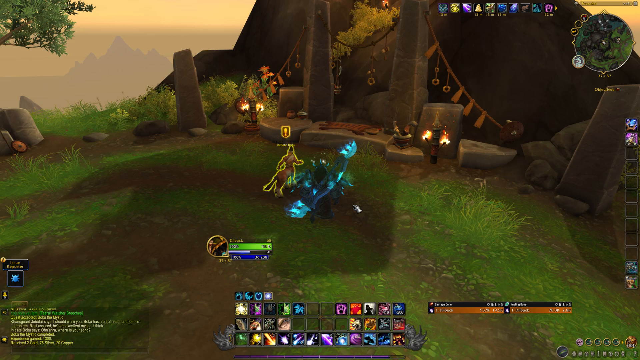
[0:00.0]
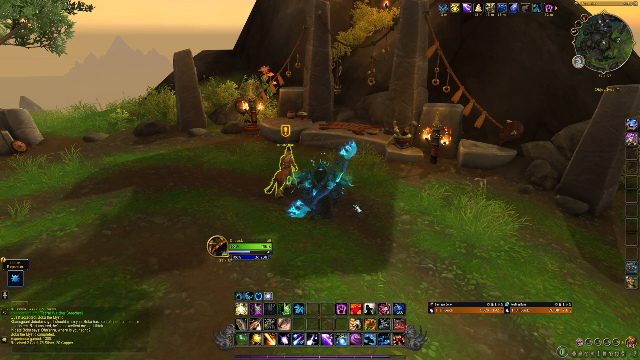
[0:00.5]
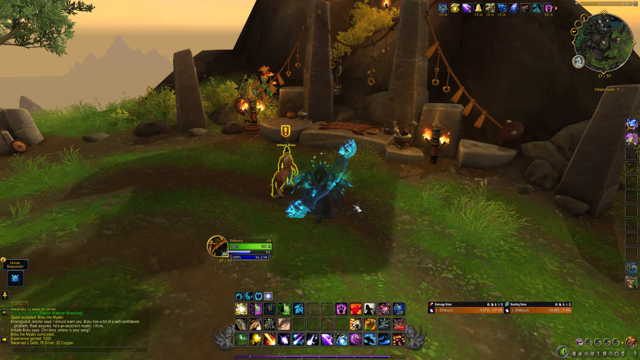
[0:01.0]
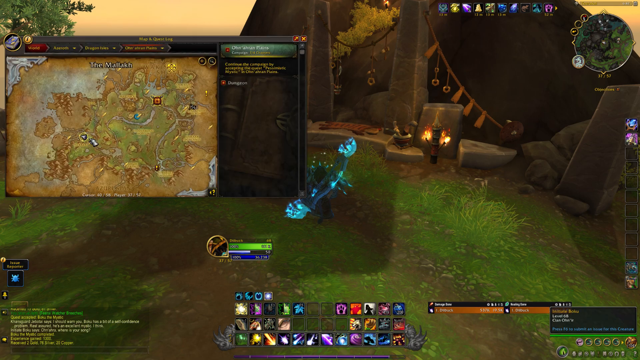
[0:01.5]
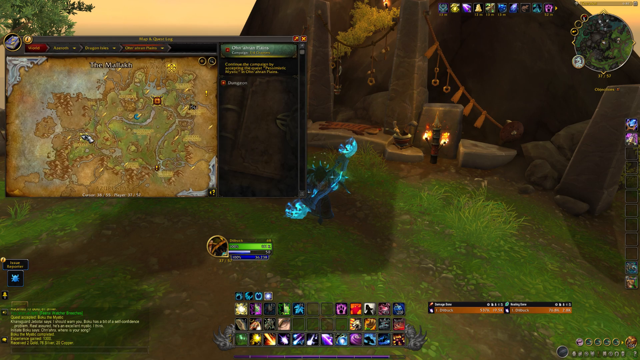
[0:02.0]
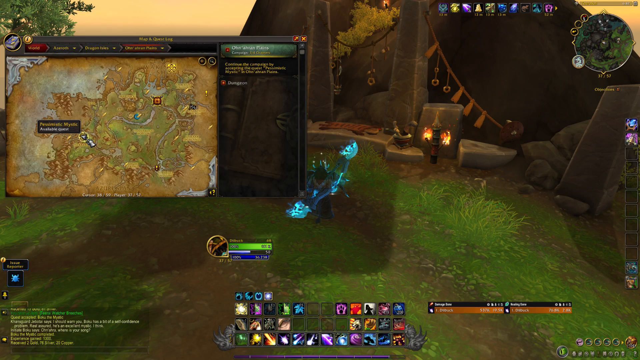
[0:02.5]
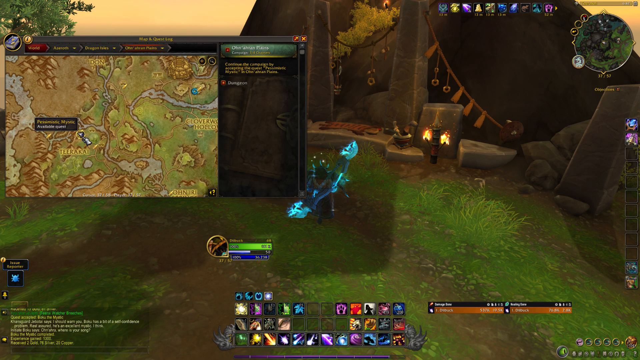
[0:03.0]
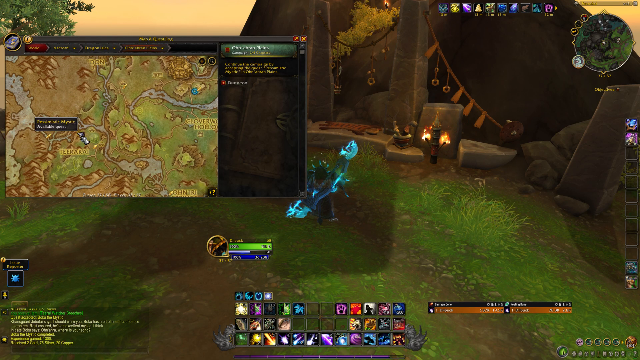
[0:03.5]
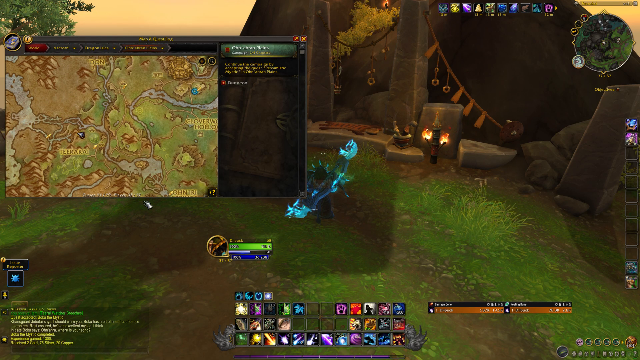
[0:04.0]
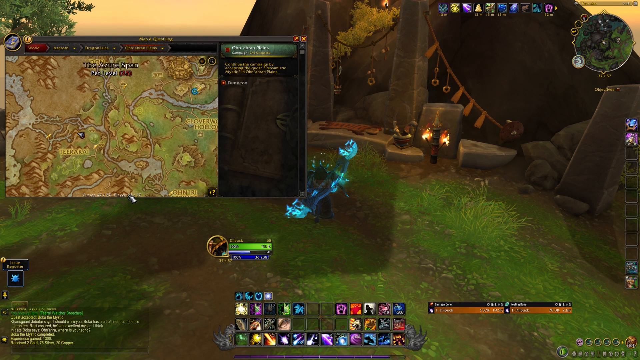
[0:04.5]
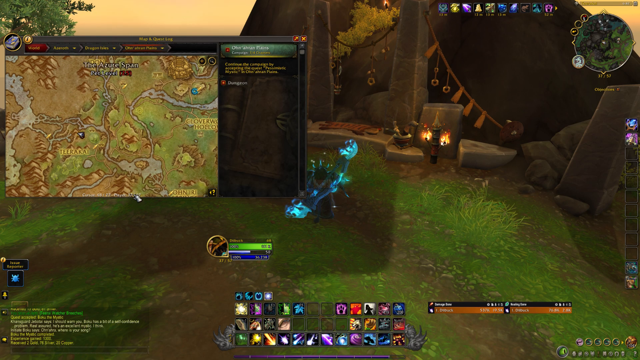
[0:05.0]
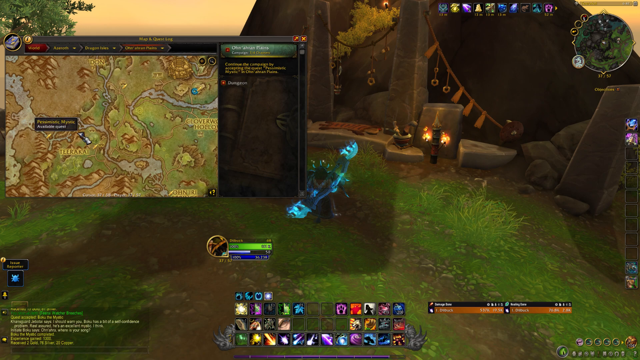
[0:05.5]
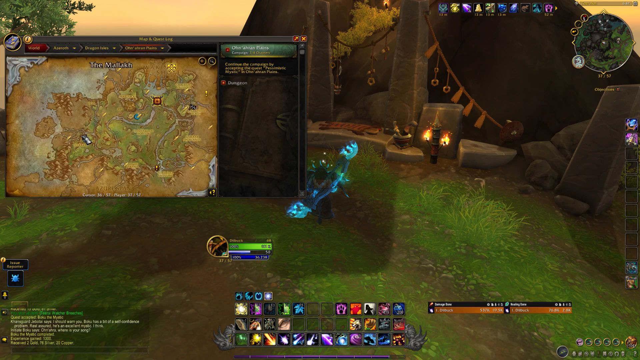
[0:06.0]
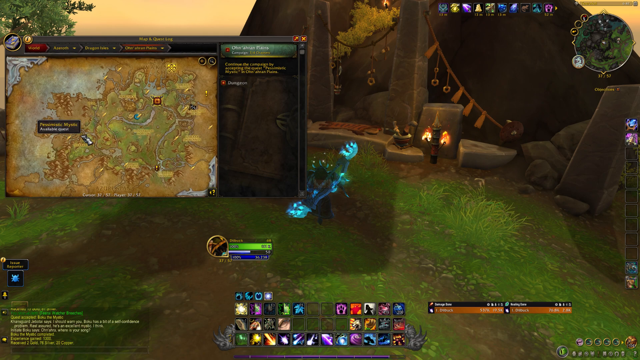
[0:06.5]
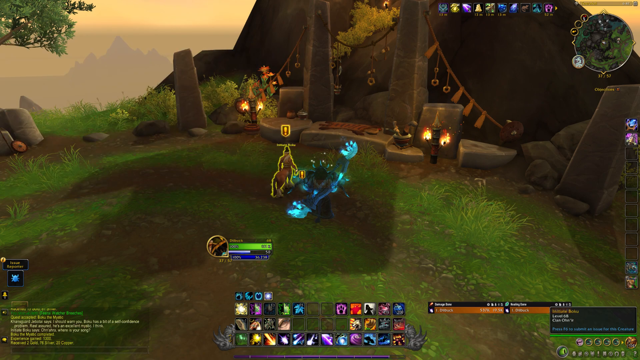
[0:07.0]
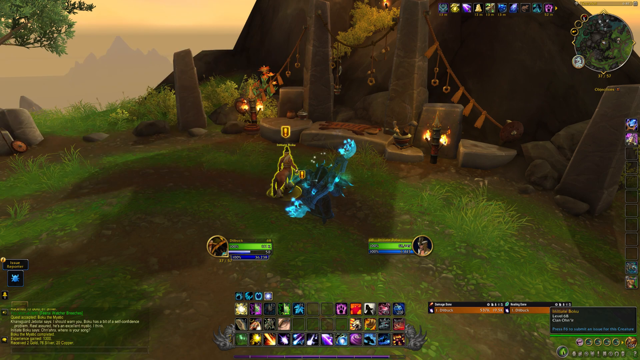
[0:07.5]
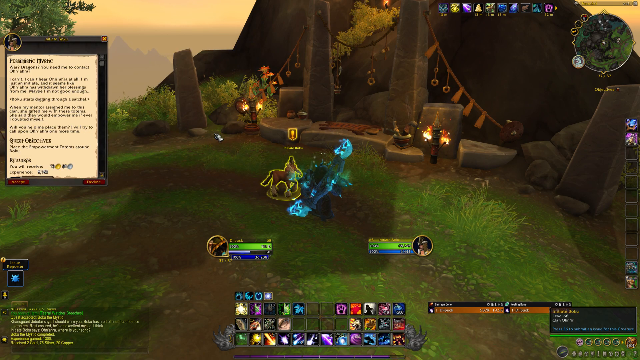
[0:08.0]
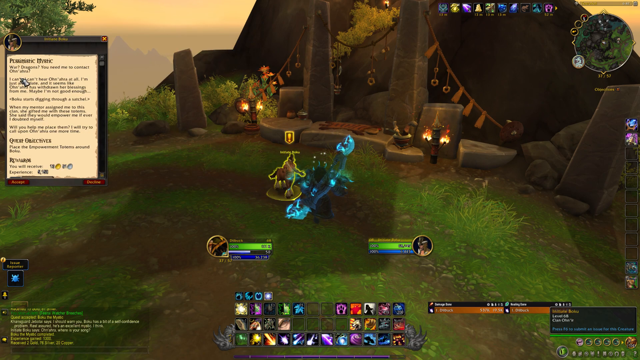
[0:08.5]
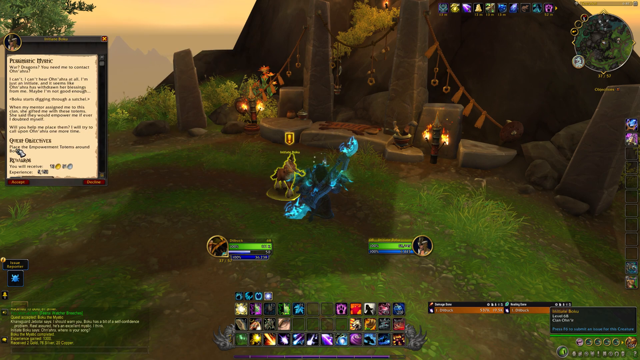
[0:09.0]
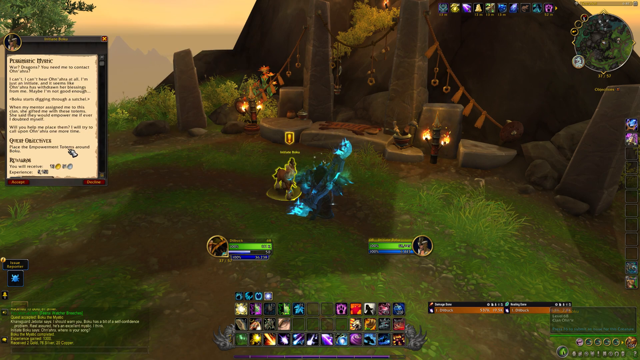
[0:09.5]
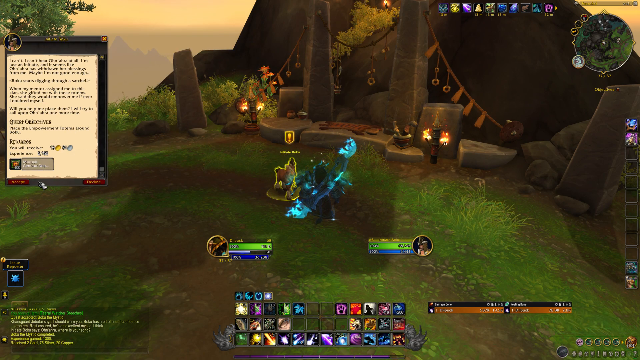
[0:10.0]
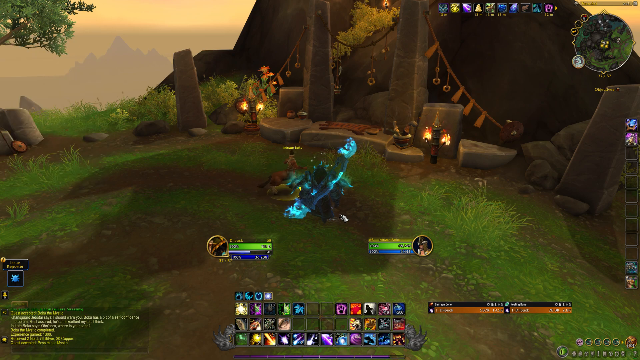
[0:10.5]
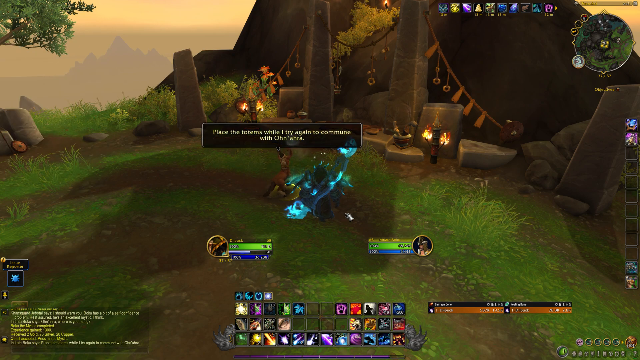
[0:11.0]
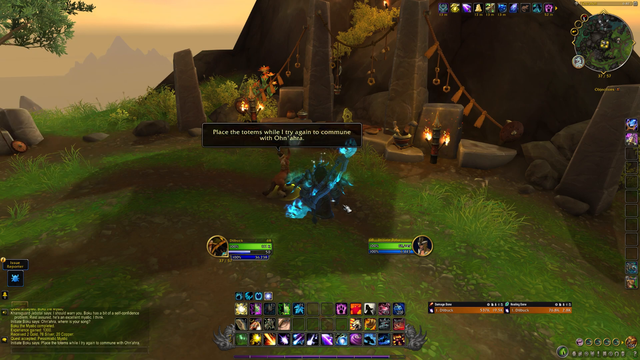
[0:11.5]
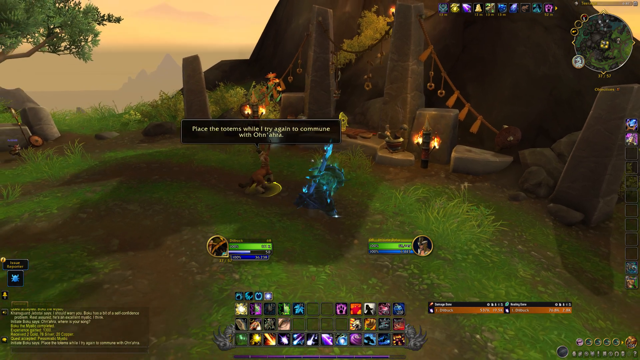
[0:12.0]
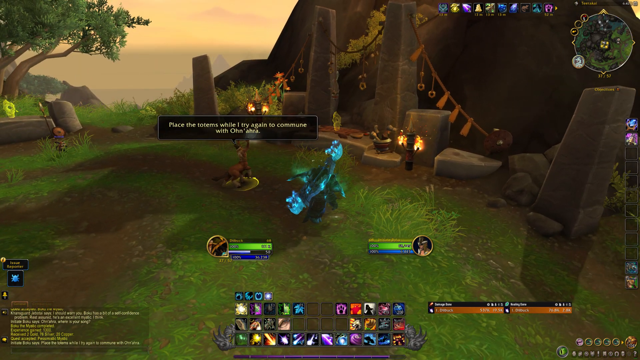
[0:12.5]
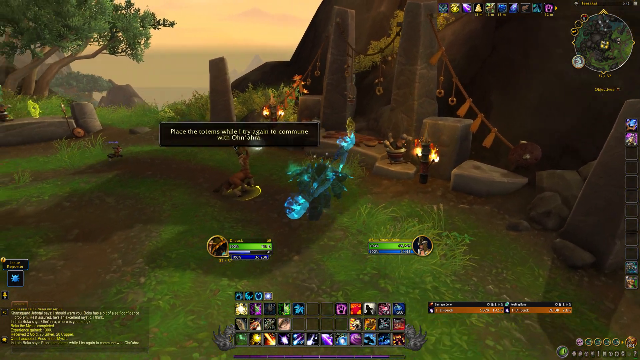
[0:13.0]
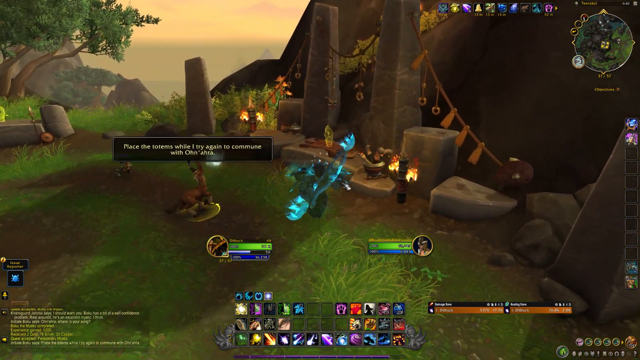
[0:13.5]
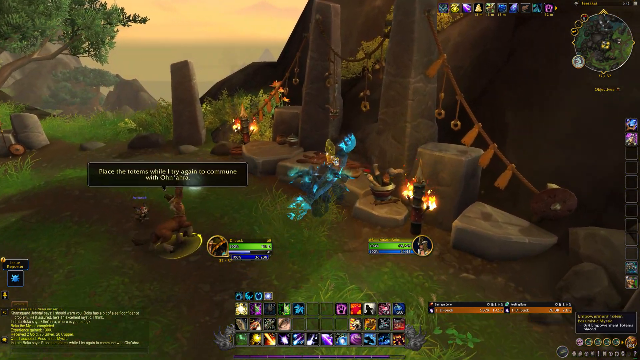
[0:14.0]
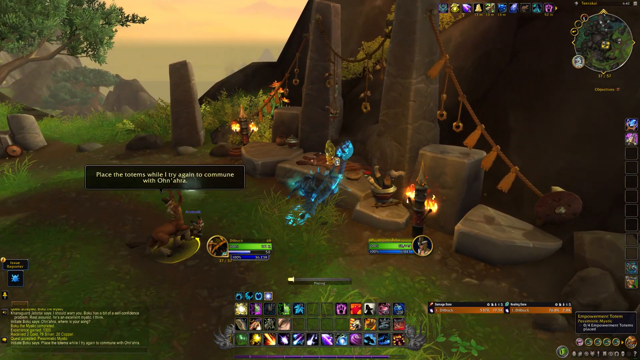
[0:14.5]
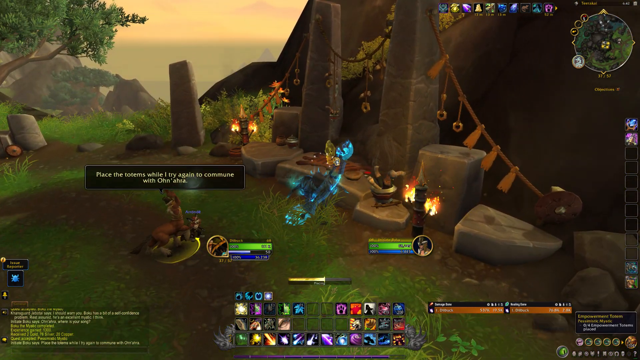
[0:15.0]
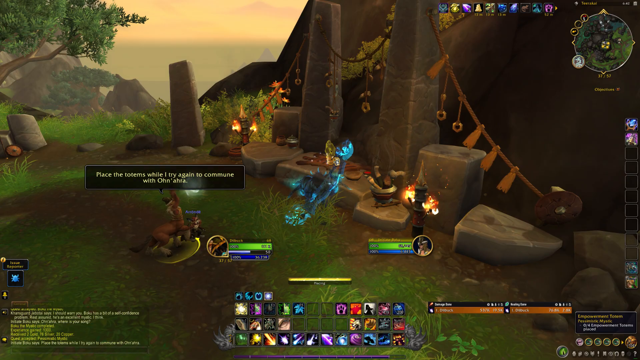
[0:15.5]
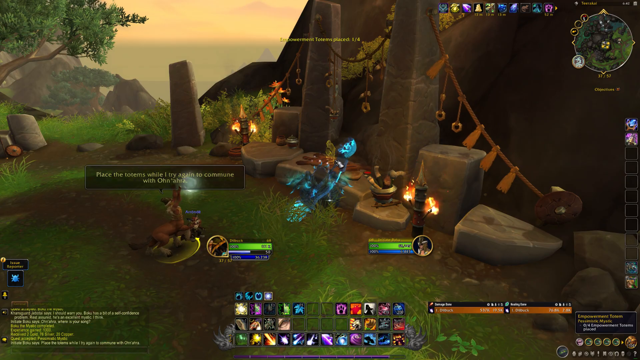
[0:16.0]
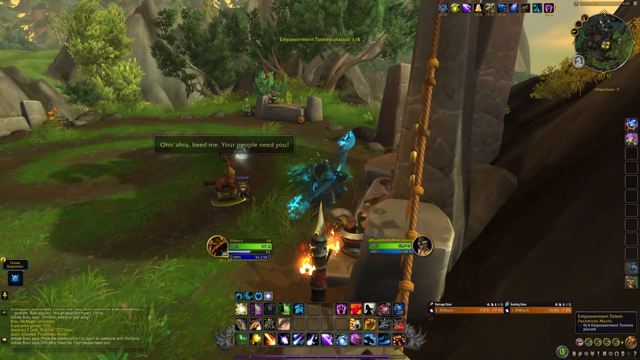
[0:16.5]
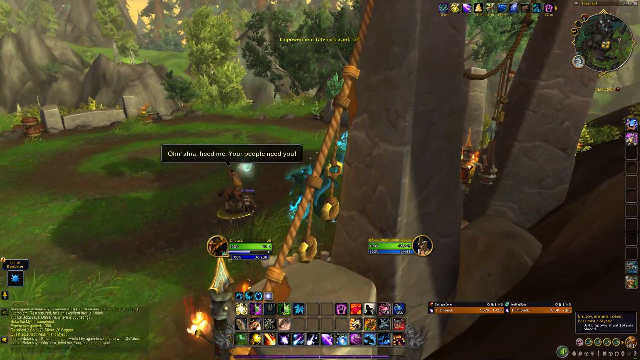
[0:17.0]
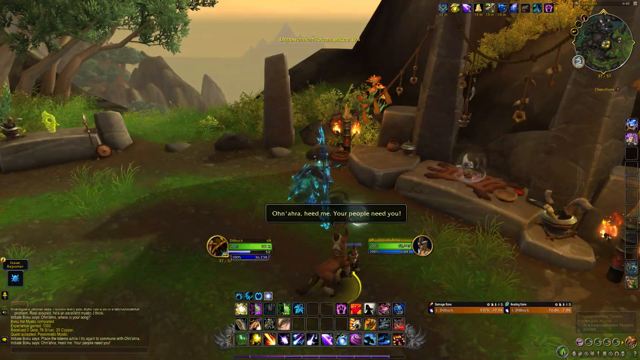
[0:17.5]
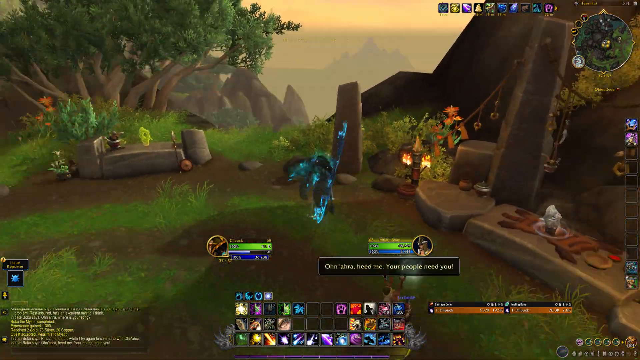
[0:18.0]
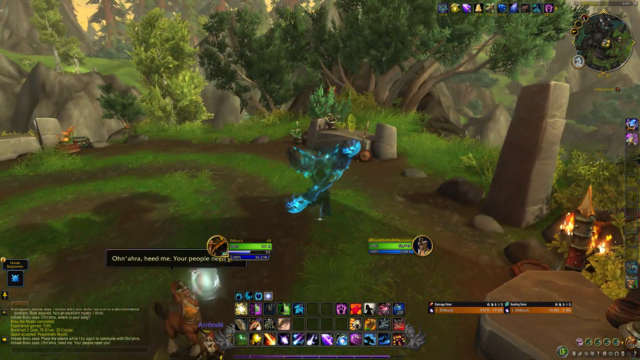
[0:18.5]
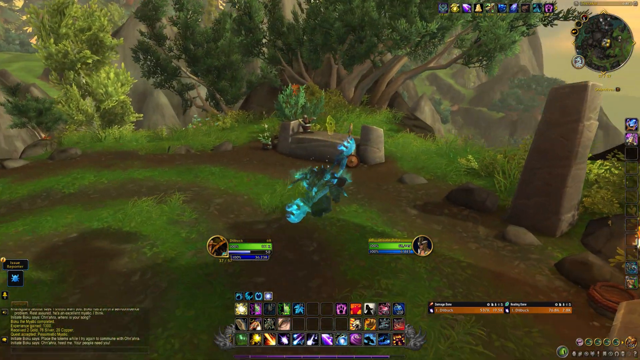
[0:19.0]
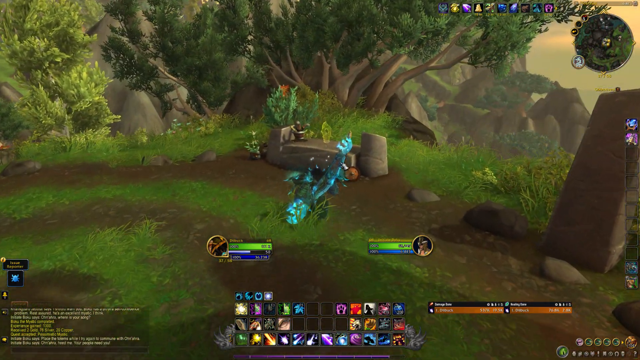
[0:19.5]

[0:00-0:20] The footage appears to be from some form of RPG game. It opens in what appears to be some sort of ruins, with a centaur highlighted by a yellow outline. A kind of mini map with various icons is at the top right, and along the bottom are various icons that look like they are potentially spells. The player brings up a bigger map and clicks on one of the icons to zoom in. The text is too small to read, but the cursor looks to be hovering over this icon and then over some other mountains. The map closes and more text appears, again too small to read, and then disappears. Text then appears above the centaur that apparently says "place the totem while I try again to commune with Onara". A player that is some kind of ethereal blue is moving, and a bar appears at the bottom that looks like the player is placing the totem. The player then starts moving towards what appears to be some form of altar with some offerings on it.